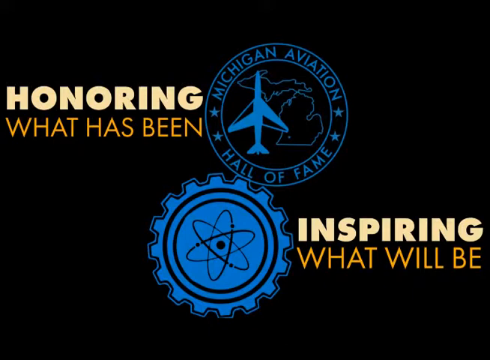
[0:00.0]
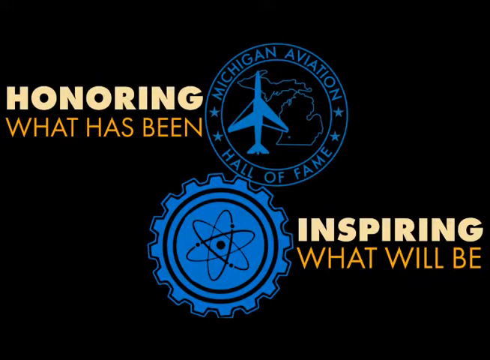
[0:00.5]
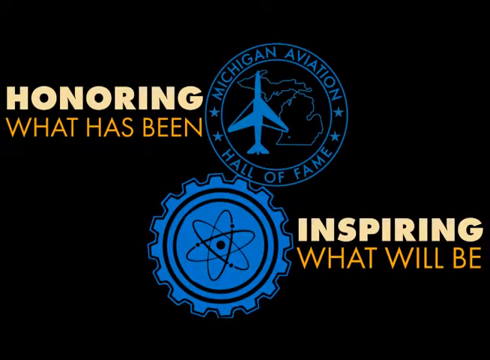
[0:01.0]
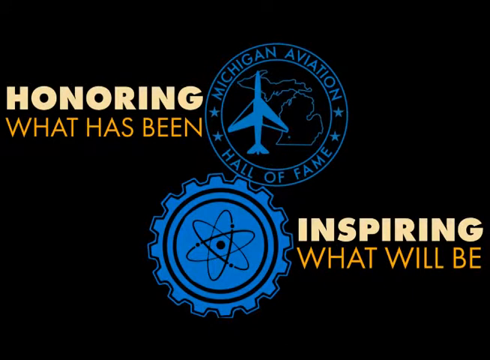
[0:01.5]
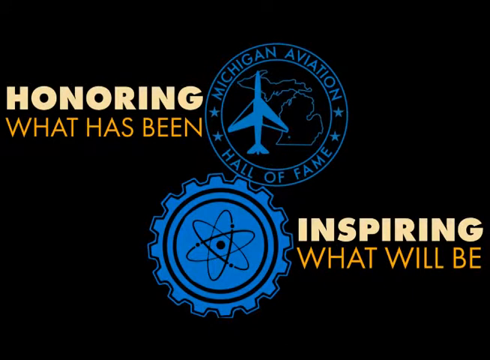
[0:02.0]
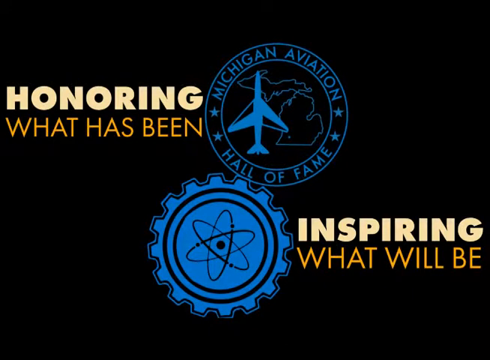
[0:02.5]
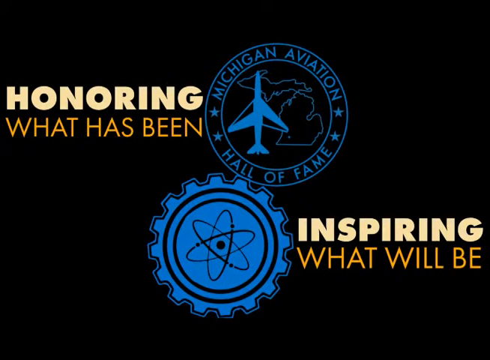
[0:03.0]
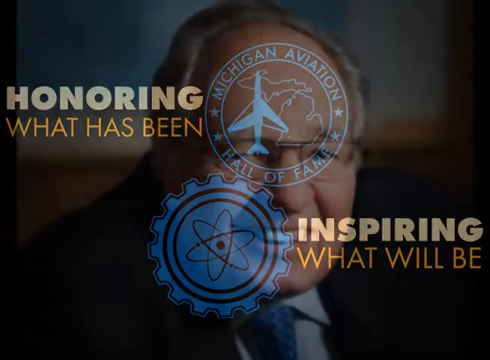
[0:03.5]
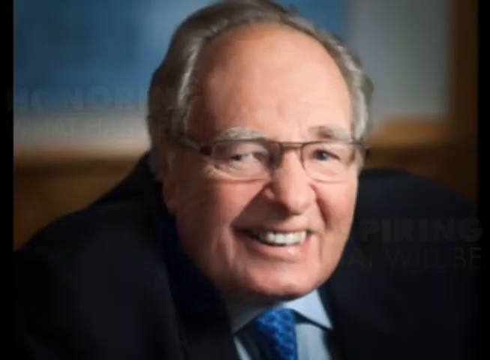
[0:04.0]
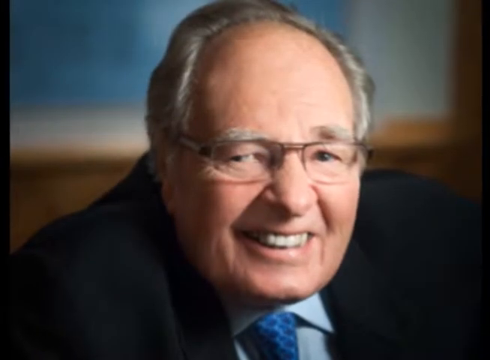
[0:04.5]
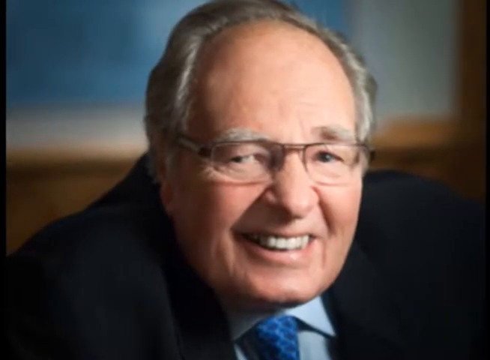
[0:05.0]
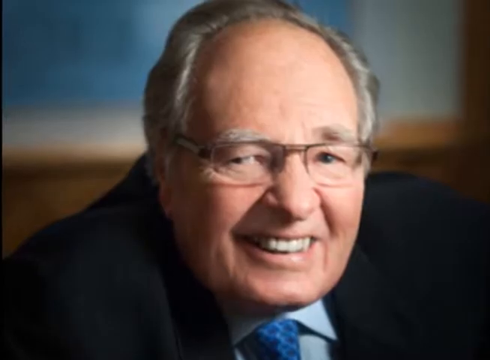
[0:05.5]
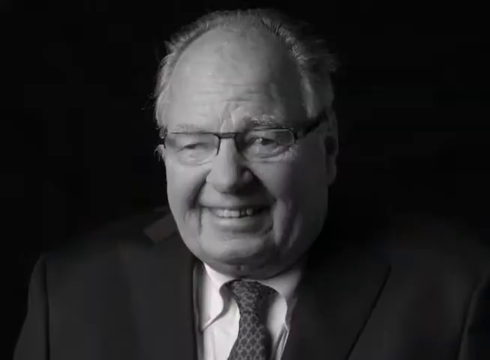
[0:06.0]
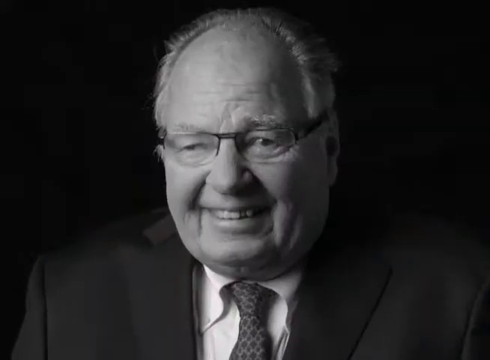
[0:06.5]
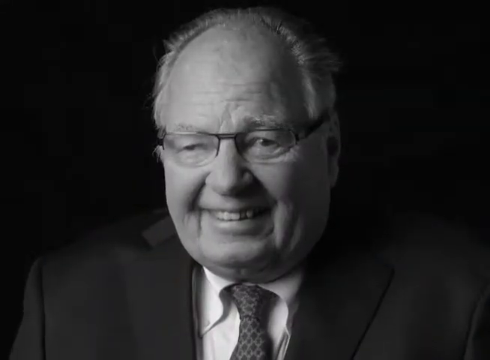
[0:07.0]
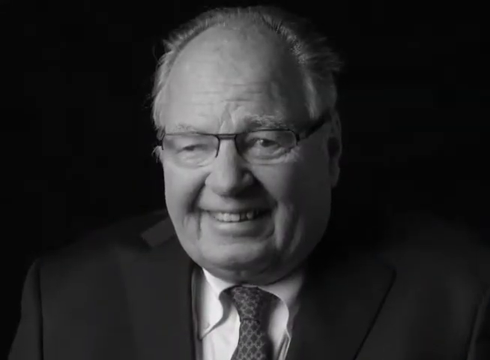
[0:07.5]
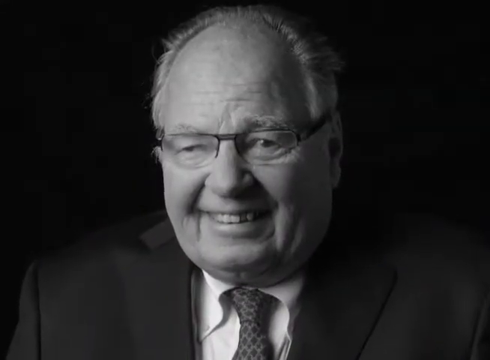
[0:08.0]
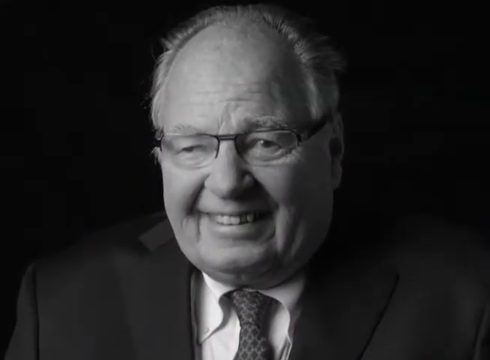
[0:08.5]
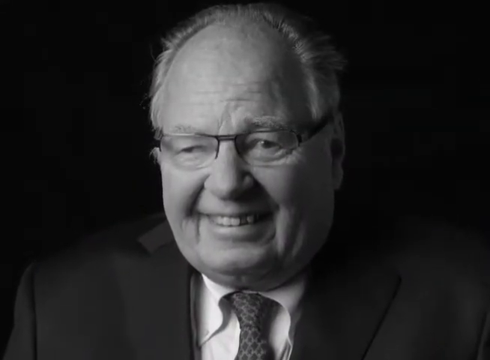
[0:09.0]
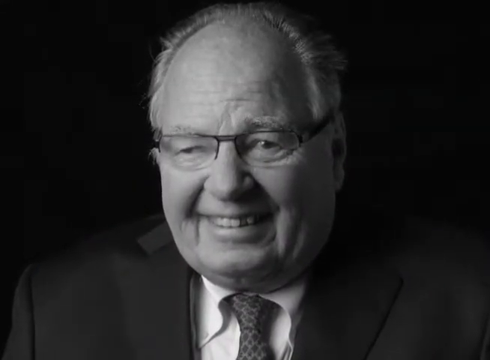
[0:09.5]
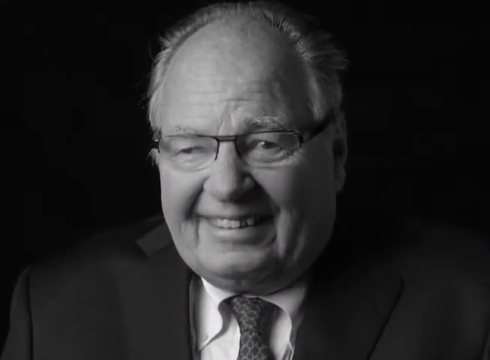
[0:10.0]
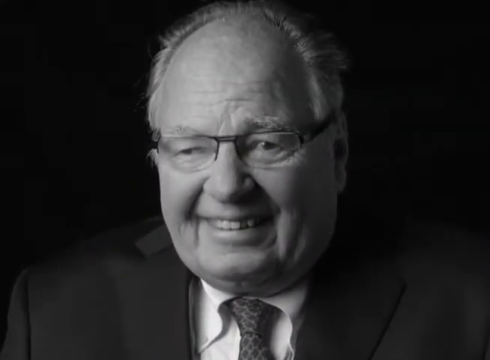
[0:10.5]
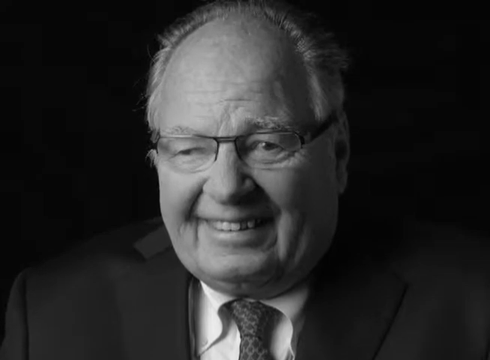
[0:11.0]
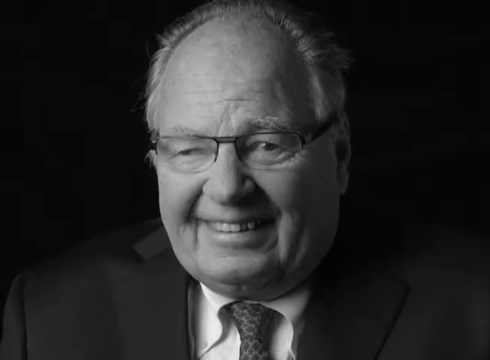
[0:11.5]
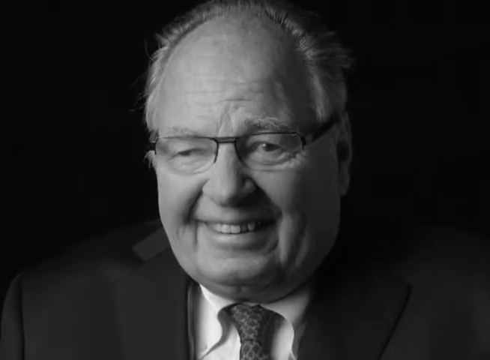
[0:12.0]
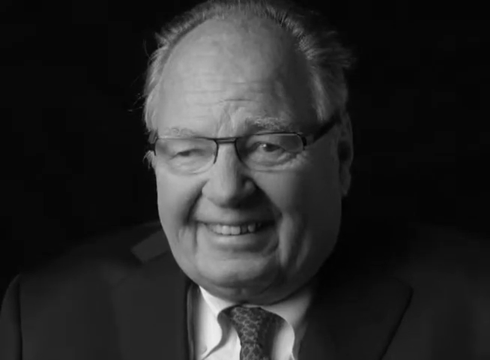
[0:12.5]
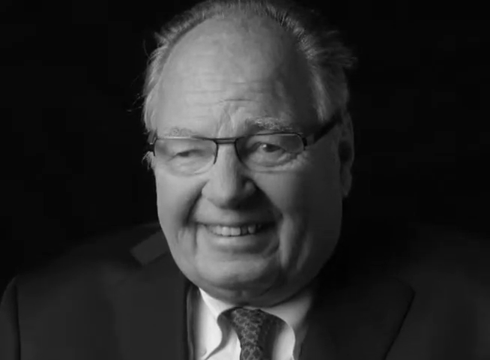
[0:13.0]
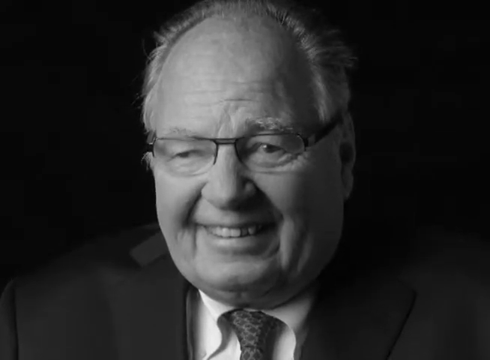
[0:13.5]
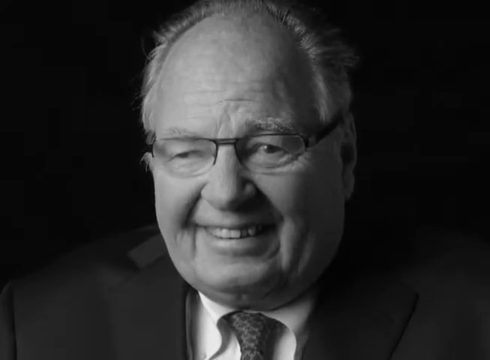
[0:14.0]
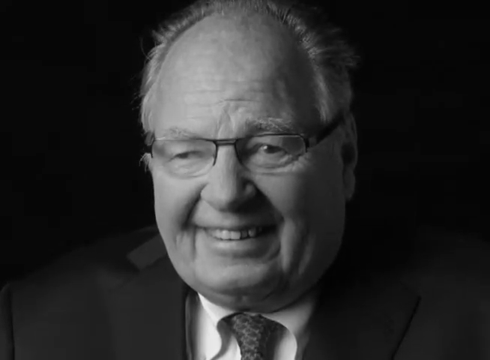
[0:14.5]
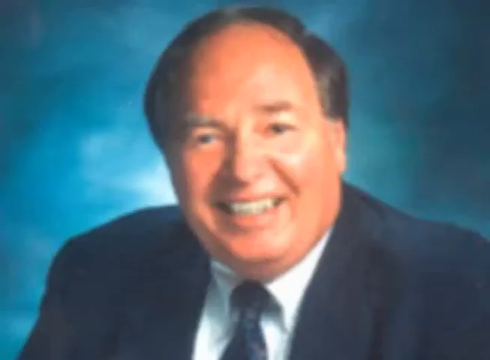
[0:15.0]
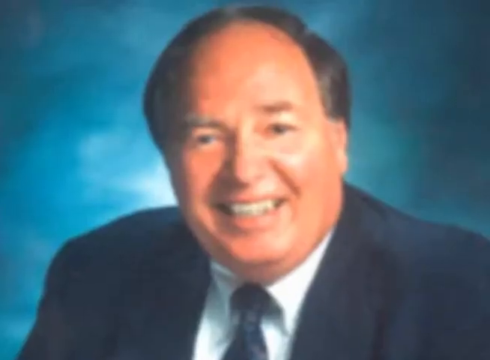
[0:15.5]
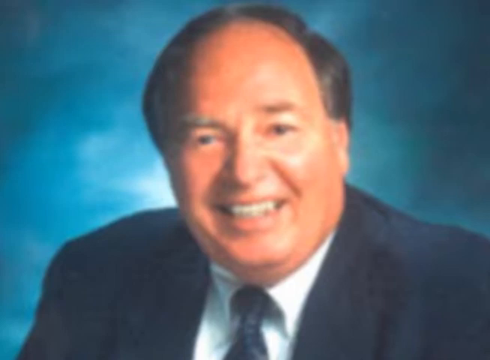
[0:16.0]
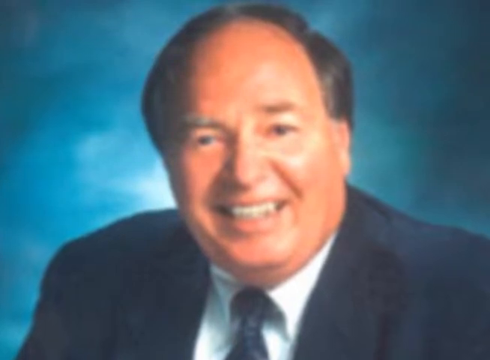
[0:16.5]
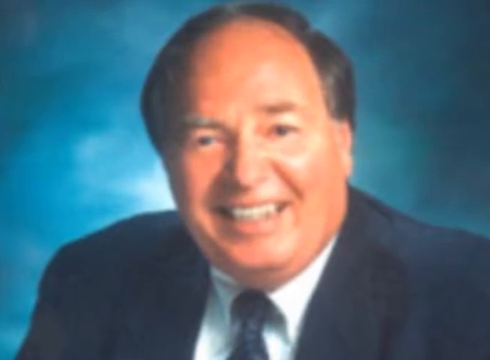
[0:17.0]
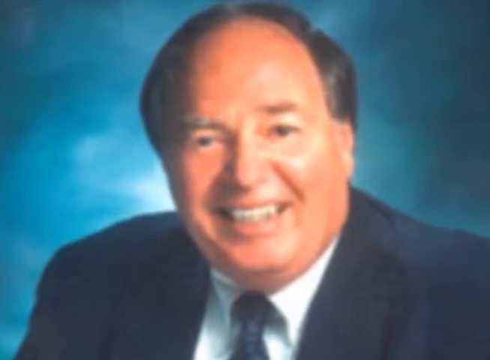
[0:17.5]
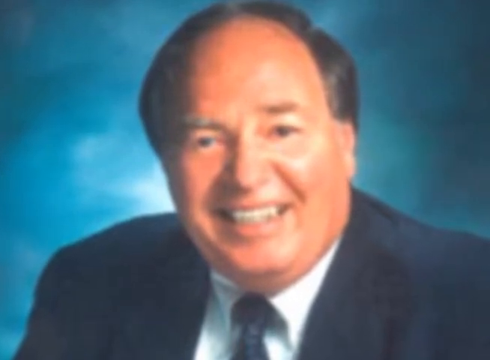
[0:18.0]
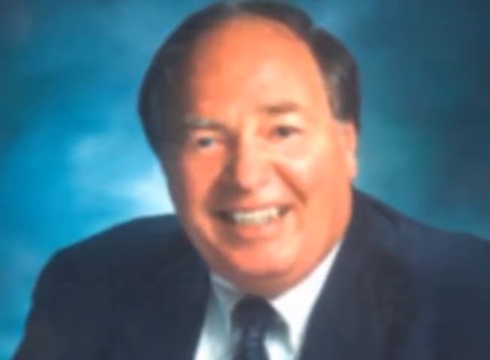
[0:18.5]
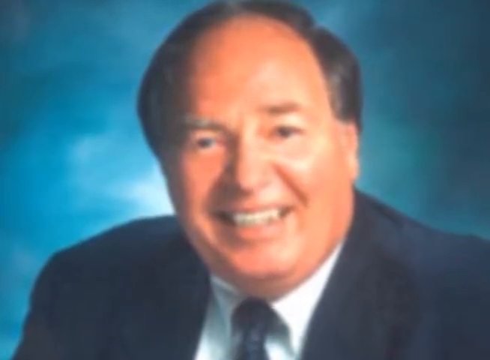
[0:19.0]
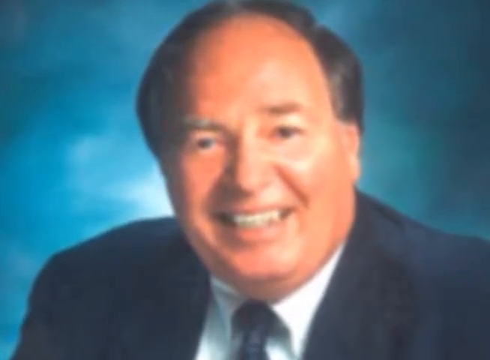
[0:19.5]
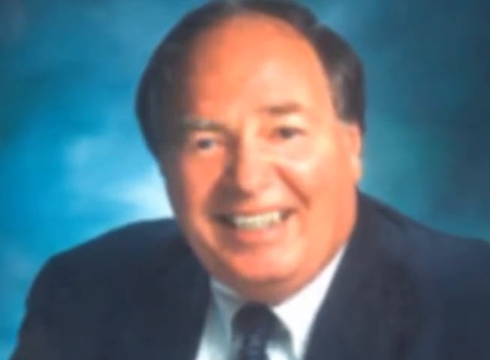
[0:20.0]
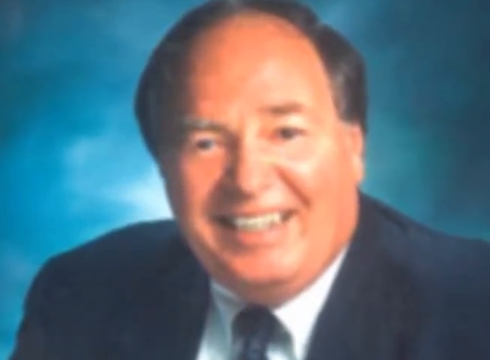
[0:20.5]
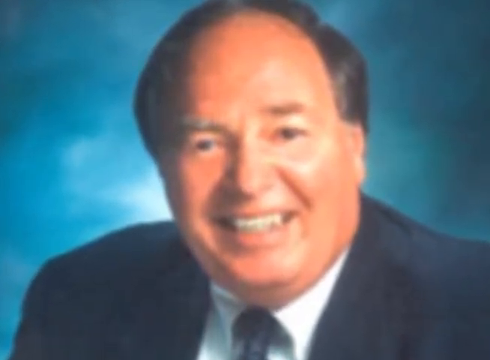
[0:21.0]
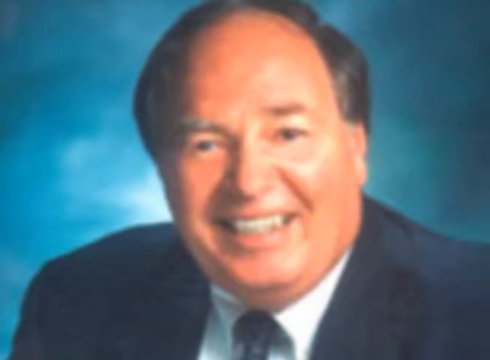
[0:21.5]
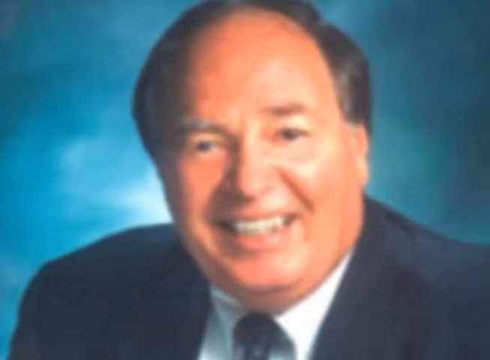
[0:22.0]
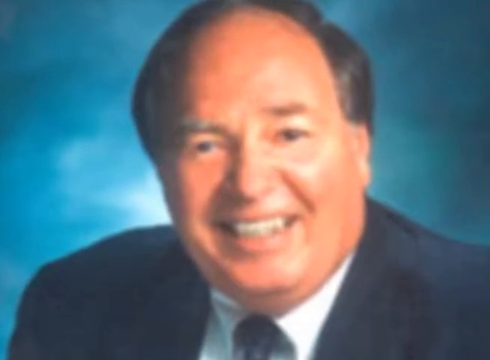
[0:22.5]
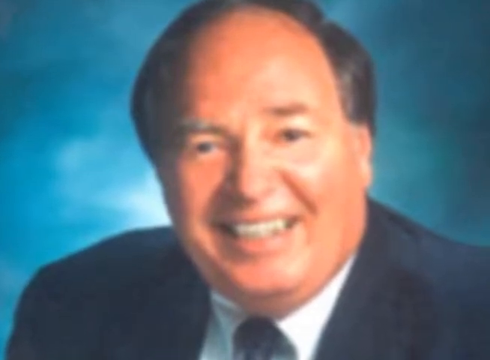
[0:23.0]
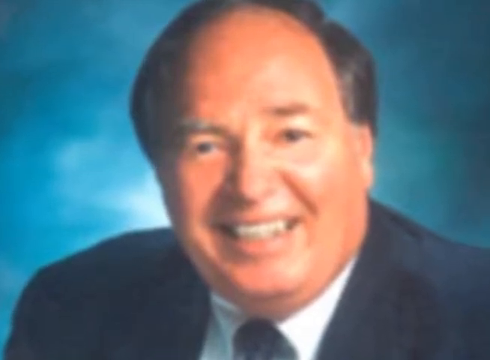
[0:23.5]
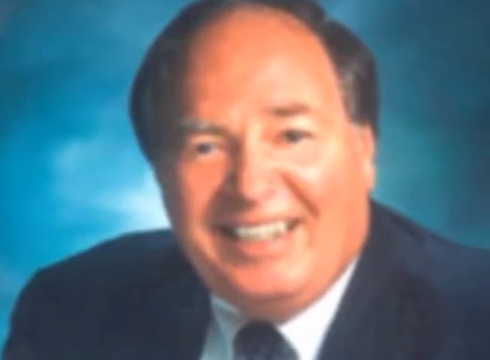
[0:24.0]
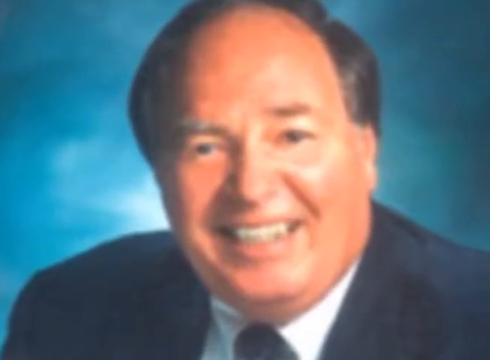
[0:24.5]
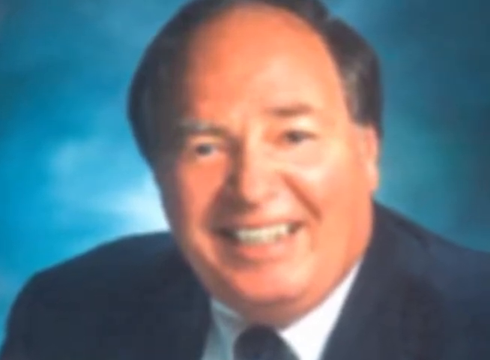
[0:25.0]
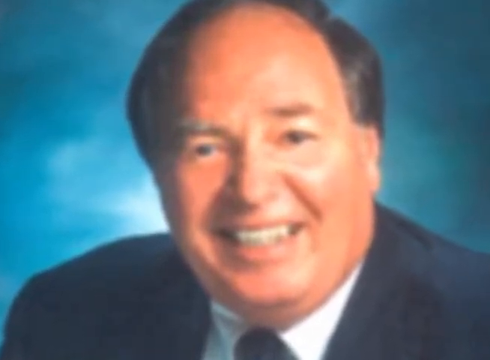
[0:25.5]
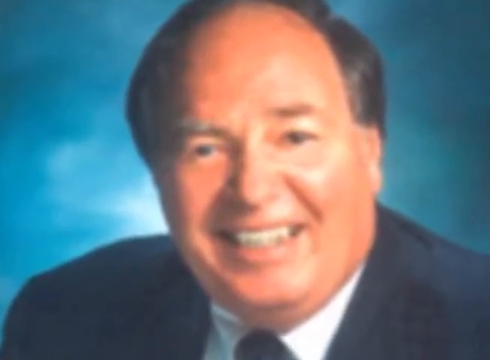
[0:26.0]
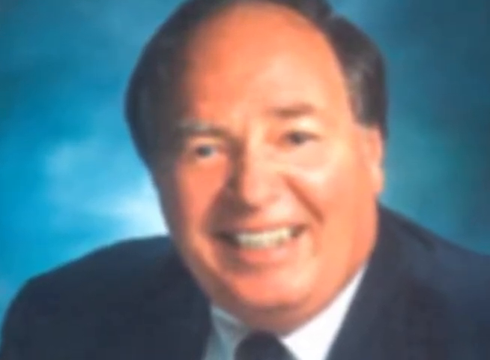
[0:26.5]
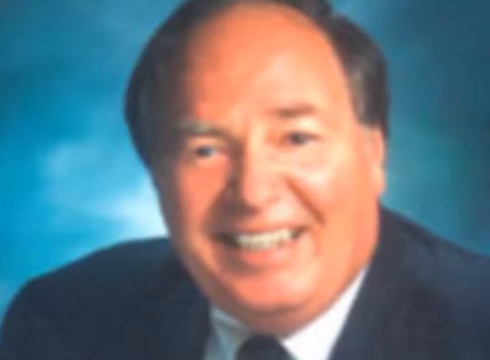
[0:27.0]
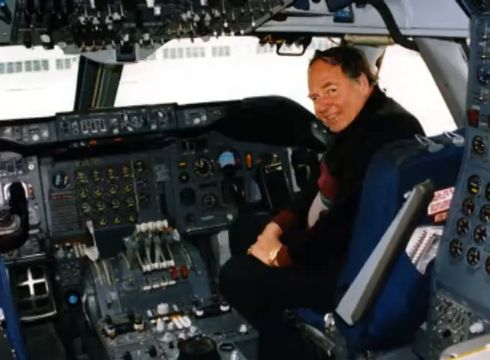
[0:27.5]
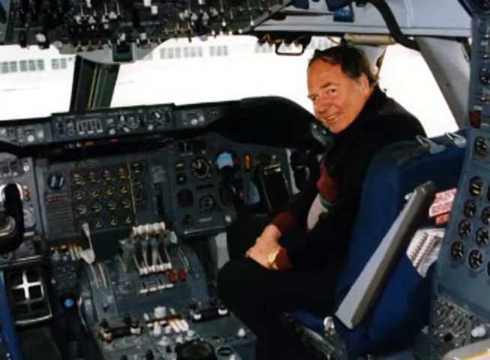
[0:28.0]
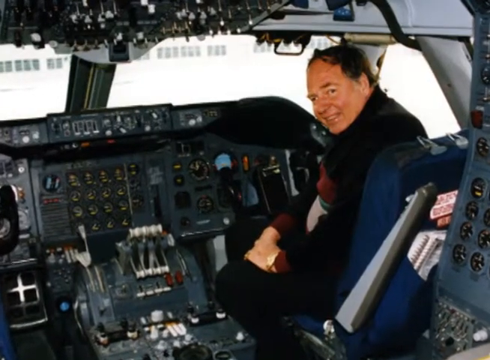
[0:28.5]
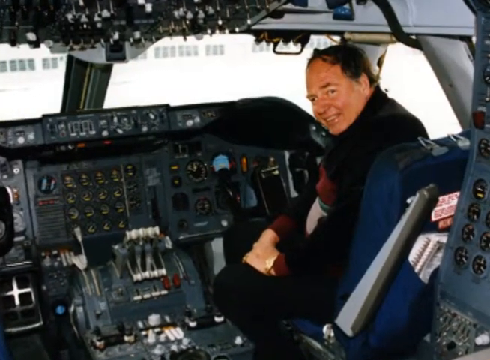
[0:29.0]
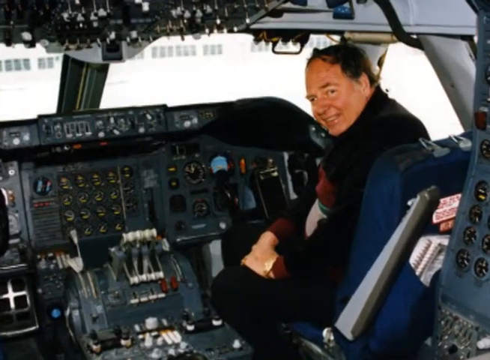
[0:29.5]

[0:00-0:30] The video begins with a black screen bearing a logo and text. The logo has a cog with what looks like an atom symbol inside it. Above it and to the right there is a circle with four stars in it, sky blue text reading "Michigan Aviation Hall of Fame", two landmasses drawn in it, and what looks like an airplane. There is text on both sides: on the left it reads "honoring what has been", and on the right, toward the bottom, "inspiring what will be". The video transitions to various pictures of a mature gentleman wearing a suit, prescription eyeglasses, a necktie and a shirt. There are also photographs of him at a somewhat younger age, without gray hair and with a slightly less receding hairline, also in suit jackets, shirts and neckties. The video then transitions to the same gentleman in the cockpit of what looks like a commercial airplane. All the instrument panels are visible; he is on the left side, sitting in the right seat.